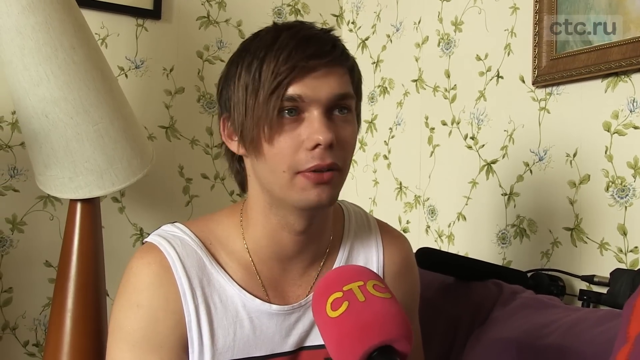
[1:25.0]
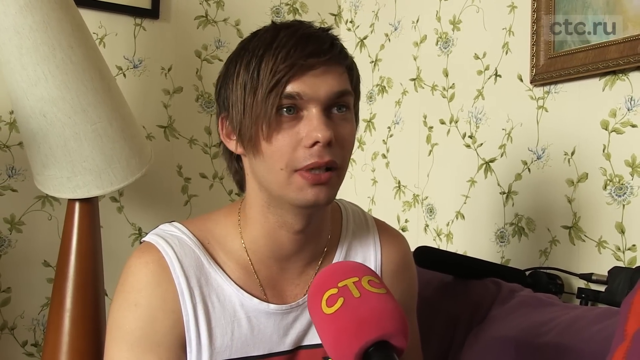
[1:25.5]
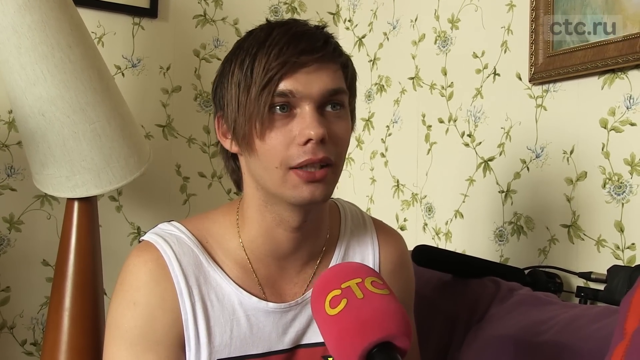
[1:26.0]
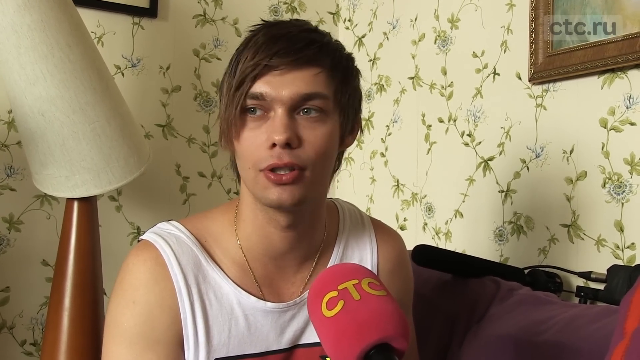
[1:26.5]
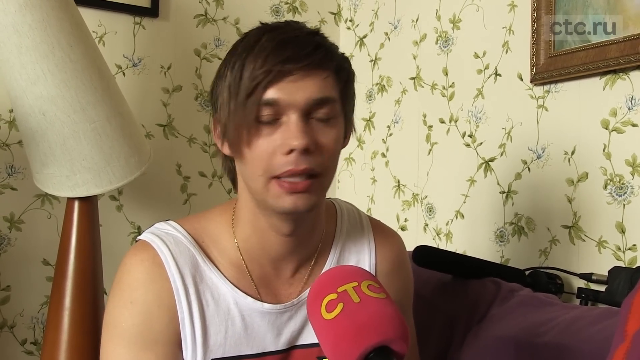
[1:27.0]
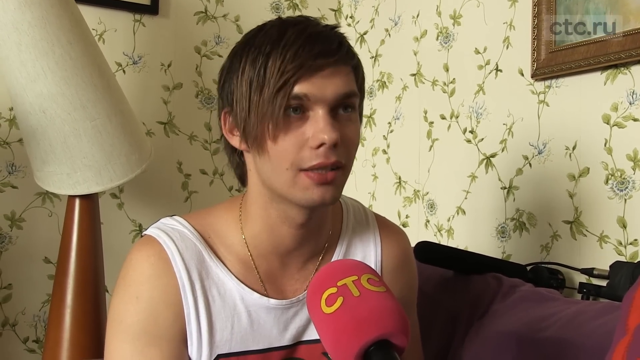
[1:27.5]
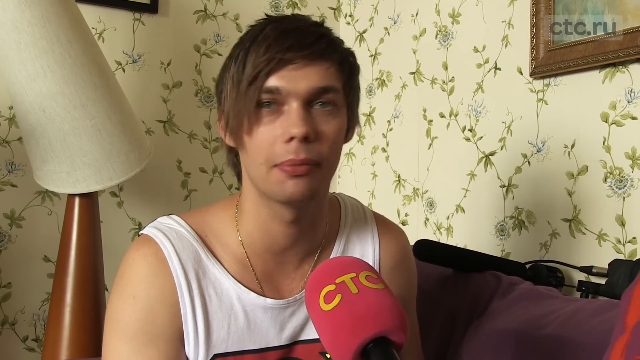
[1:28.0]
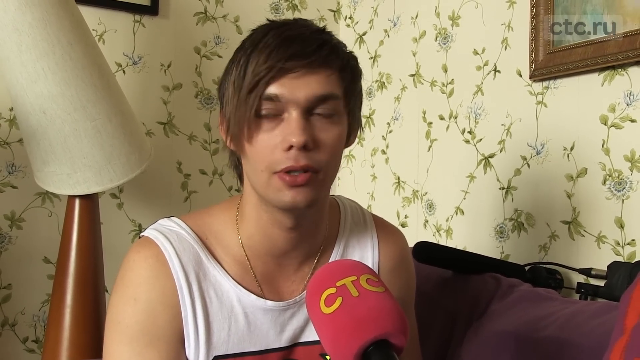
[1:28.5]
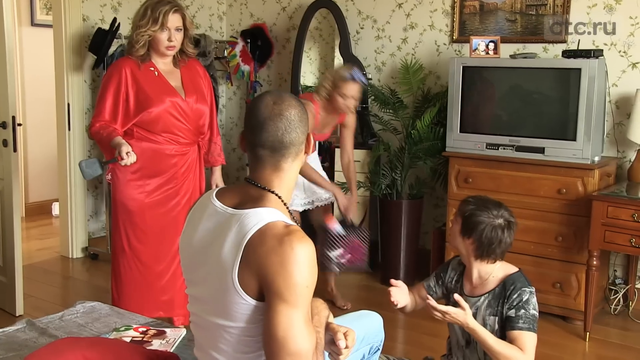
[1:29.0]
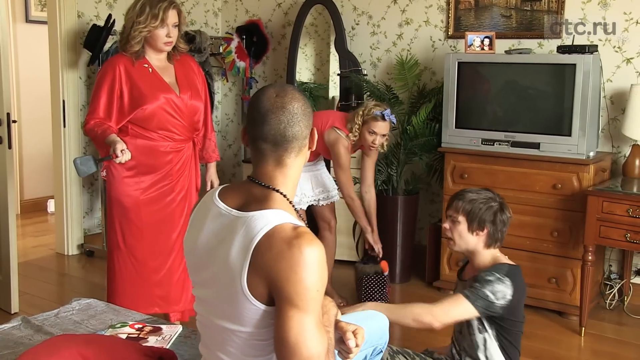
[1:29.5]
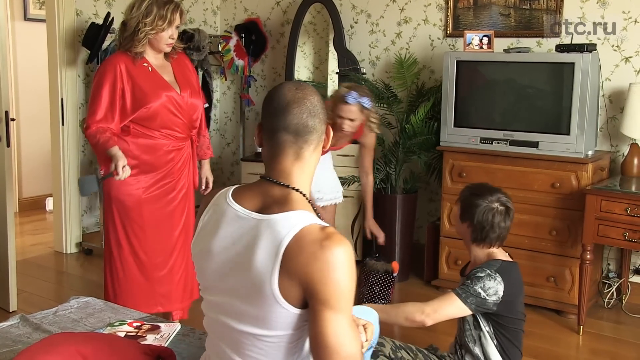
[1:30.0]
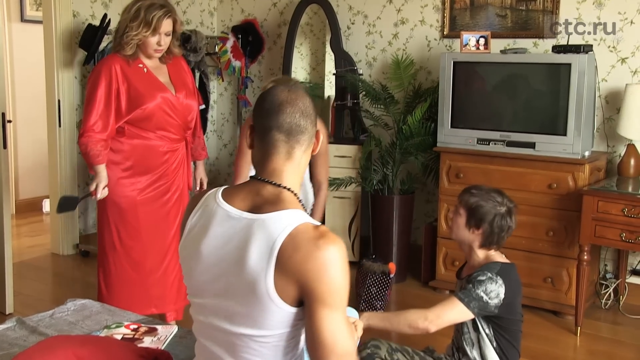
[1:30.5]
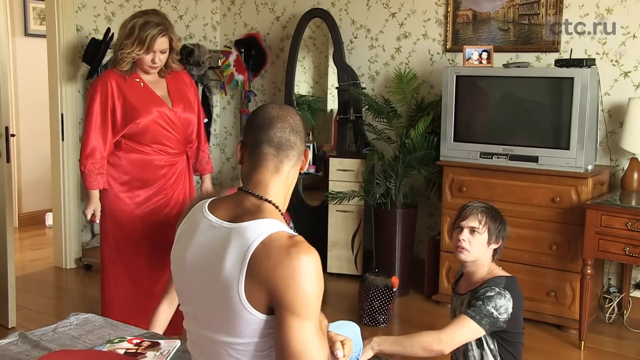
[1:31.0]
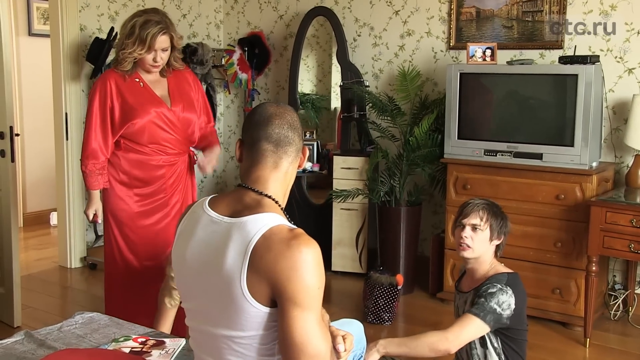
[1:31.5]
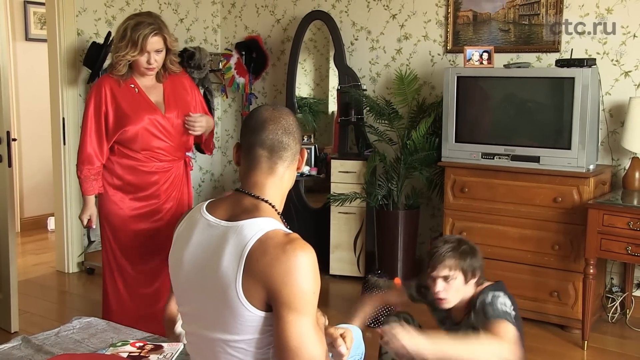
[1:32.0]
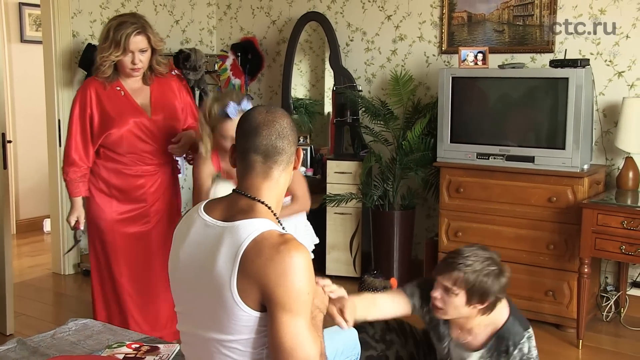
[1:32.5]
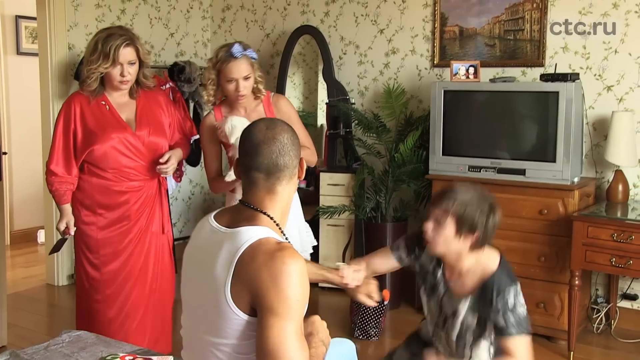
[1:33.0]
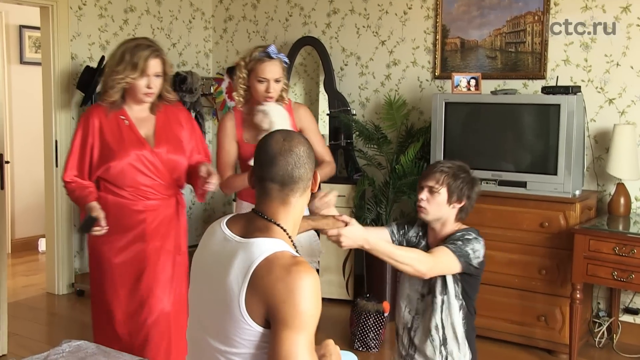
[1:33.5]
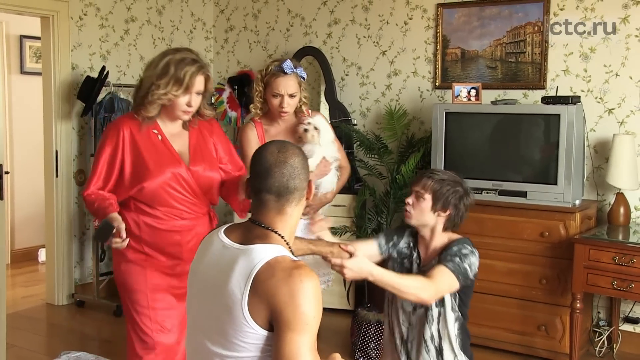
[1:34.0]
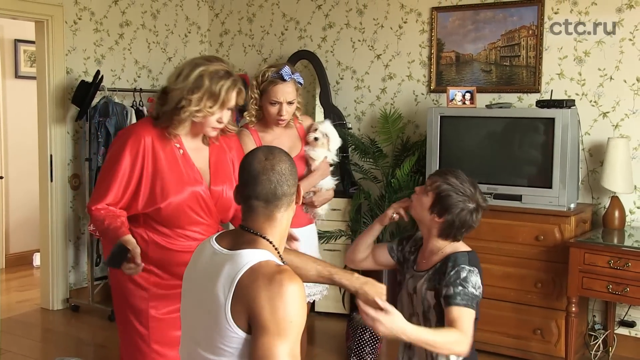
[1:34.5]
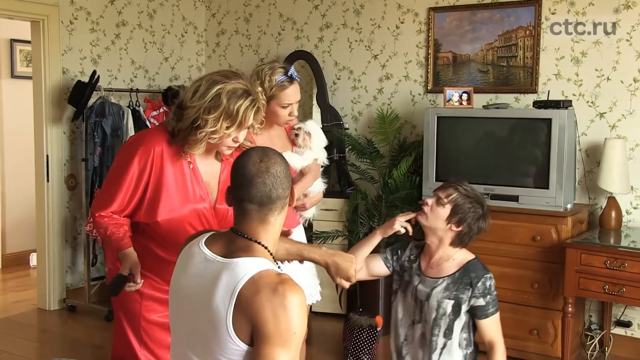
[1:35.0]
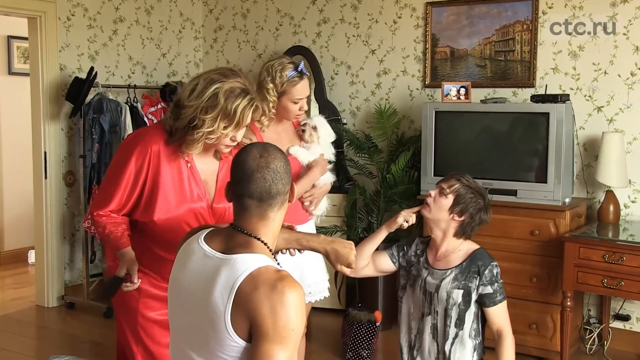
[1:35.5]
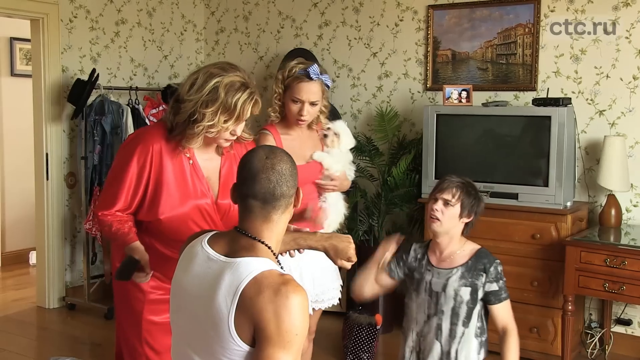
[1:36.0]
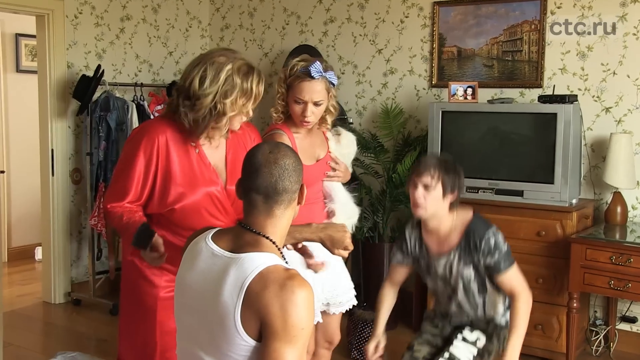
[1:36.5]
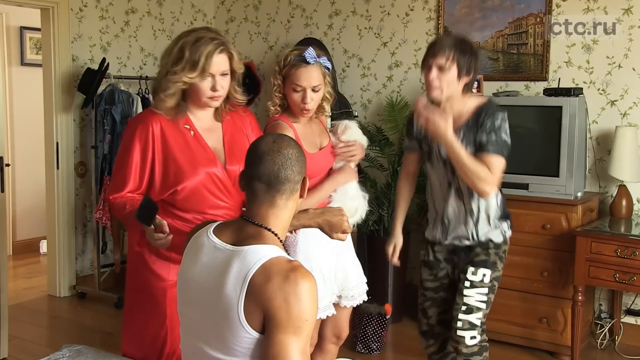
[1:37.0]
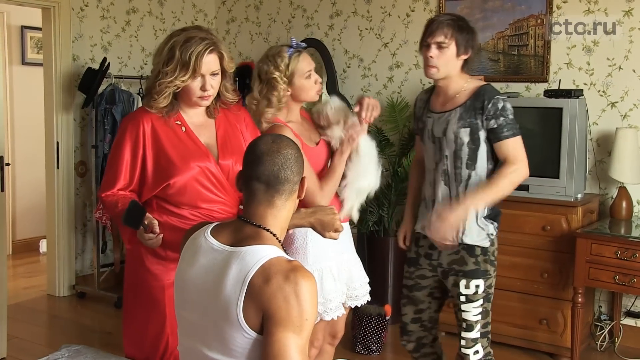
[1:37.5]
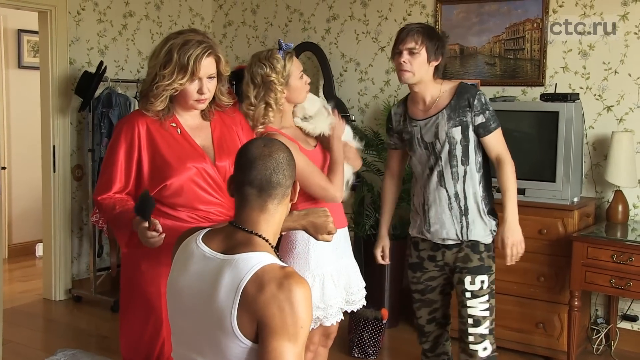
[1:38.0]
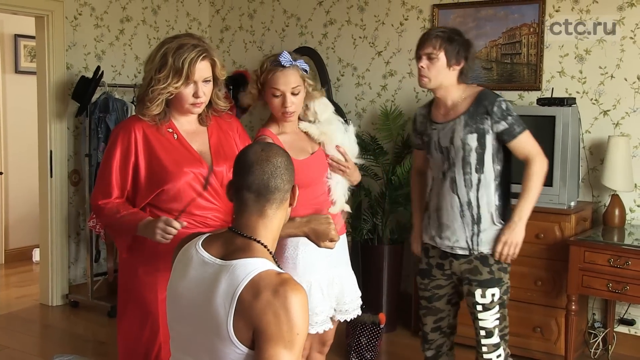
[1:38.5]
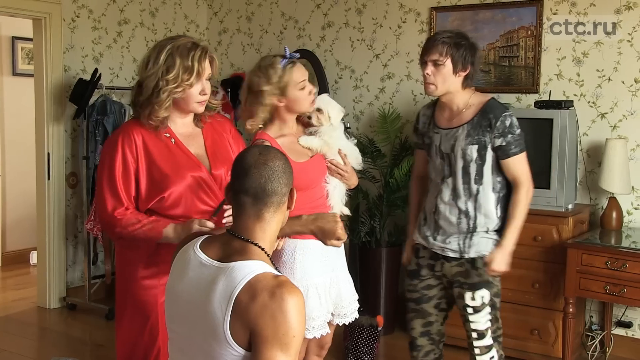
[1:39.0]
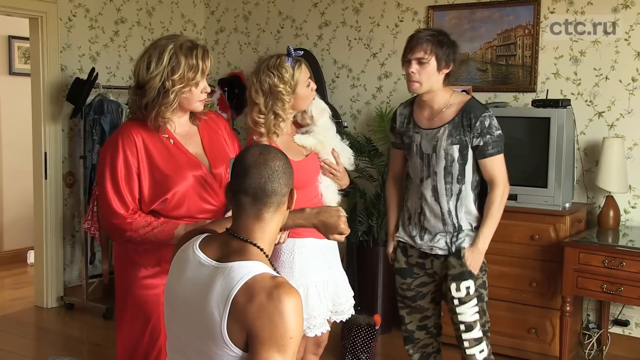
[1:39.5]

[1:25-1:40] The white guy in the Superman shirt sits on the couch, being interviewed and talking. The video switches to a scene from the show with four people and the dog: the black guy, the white guy in camouflage, the blonde girl holding the dog, and the older heavyset lady in a red robe. They look at and point to the black guy's bitten arm in the bedroom with the old TV. No crew or cameras are visible. The people don't seem very concerned that a guy has bitten another guy.